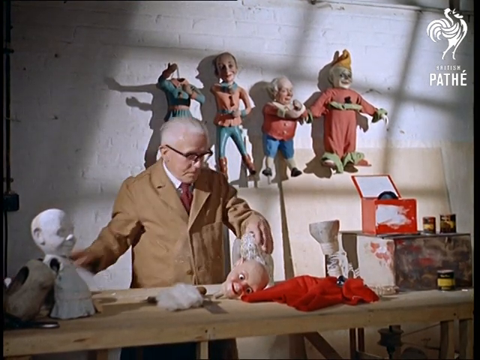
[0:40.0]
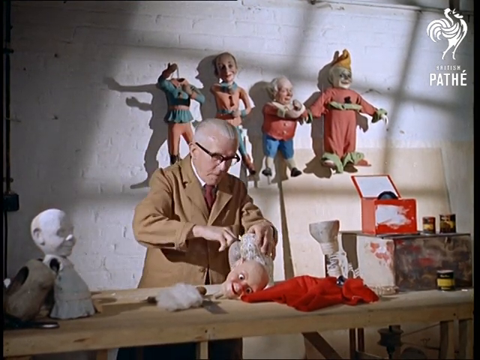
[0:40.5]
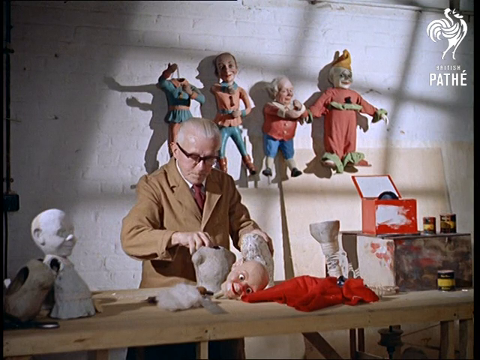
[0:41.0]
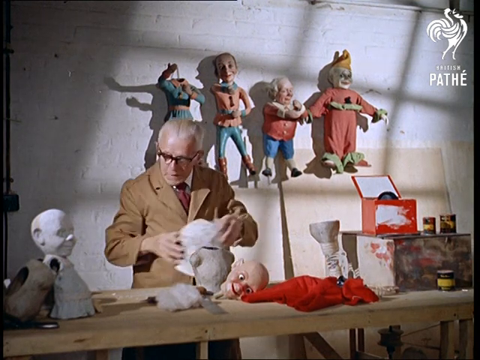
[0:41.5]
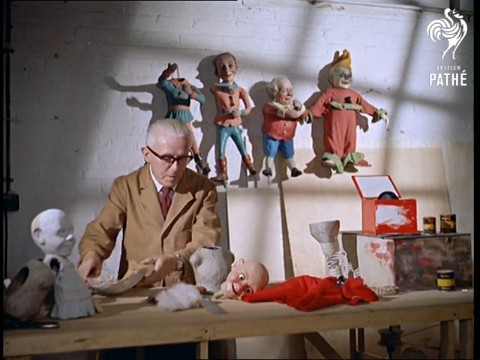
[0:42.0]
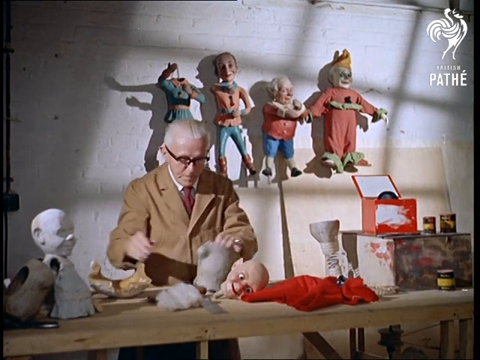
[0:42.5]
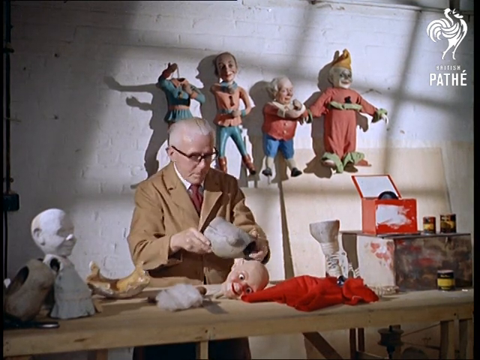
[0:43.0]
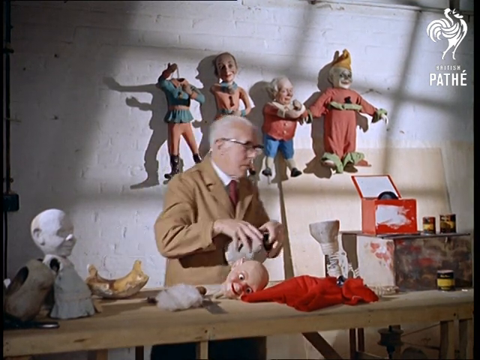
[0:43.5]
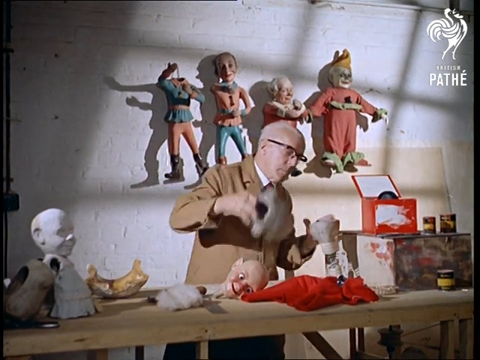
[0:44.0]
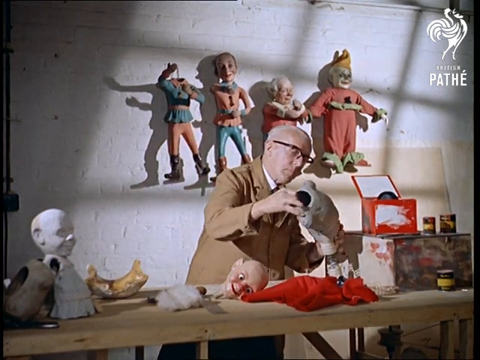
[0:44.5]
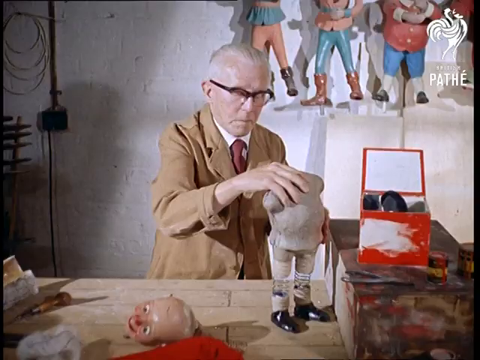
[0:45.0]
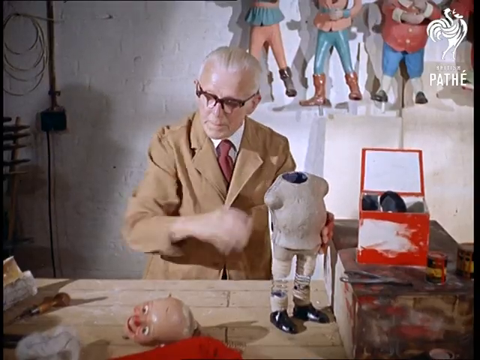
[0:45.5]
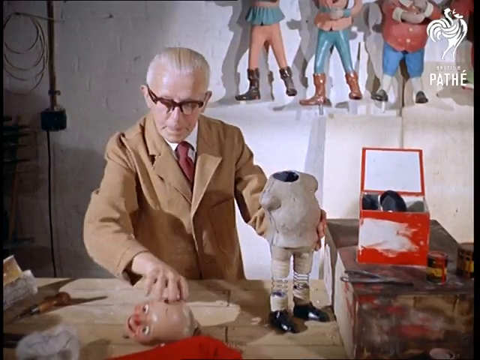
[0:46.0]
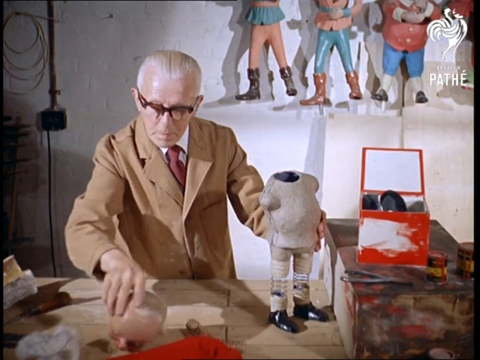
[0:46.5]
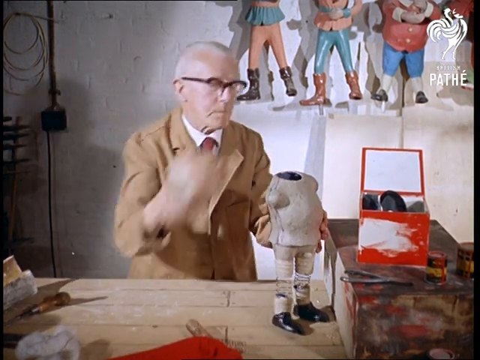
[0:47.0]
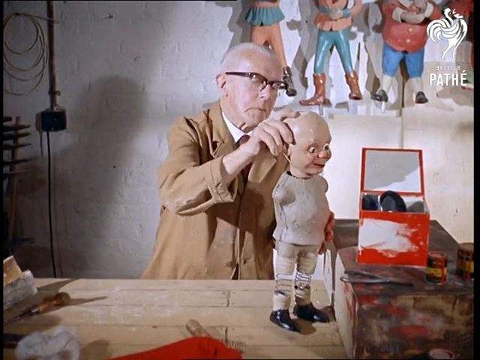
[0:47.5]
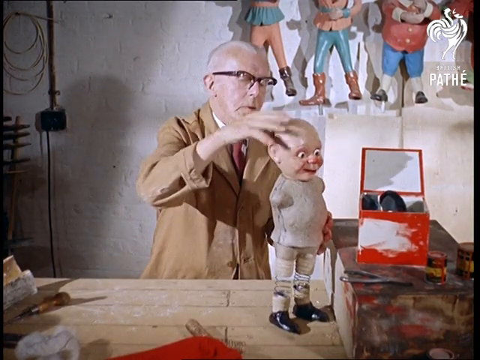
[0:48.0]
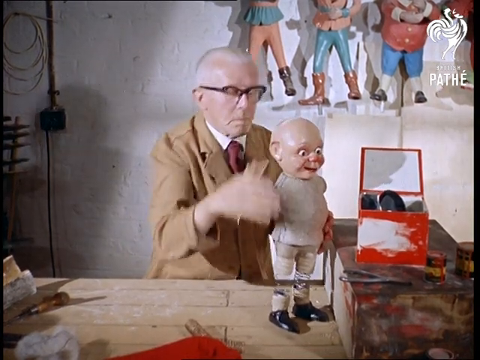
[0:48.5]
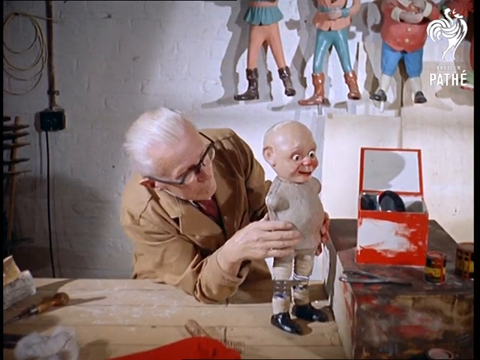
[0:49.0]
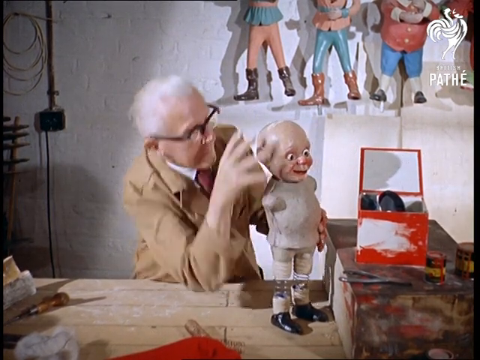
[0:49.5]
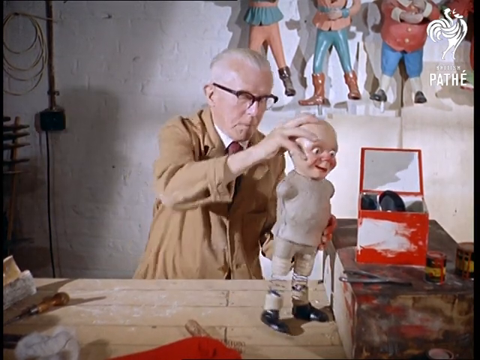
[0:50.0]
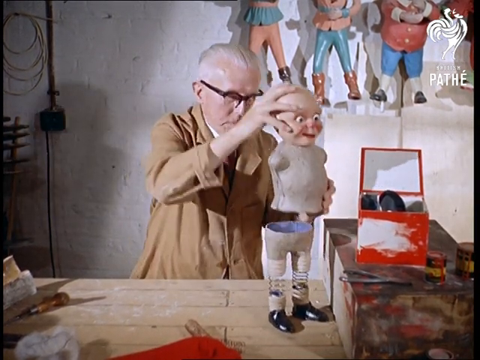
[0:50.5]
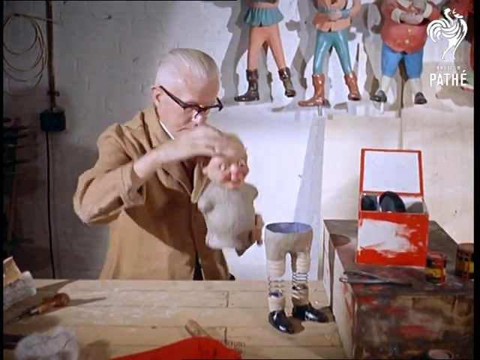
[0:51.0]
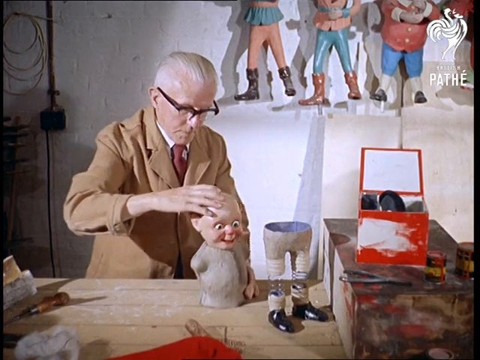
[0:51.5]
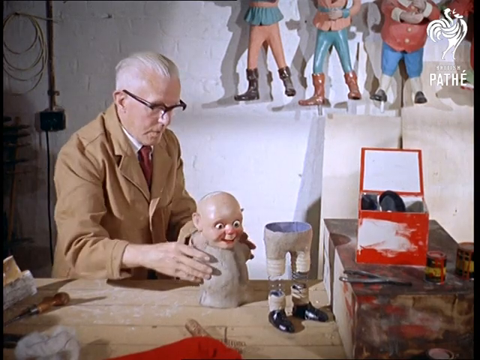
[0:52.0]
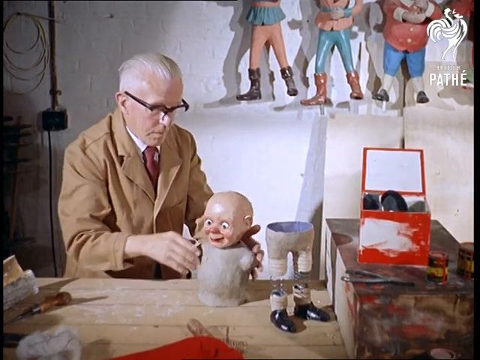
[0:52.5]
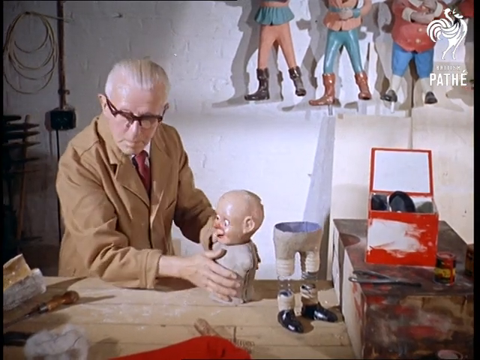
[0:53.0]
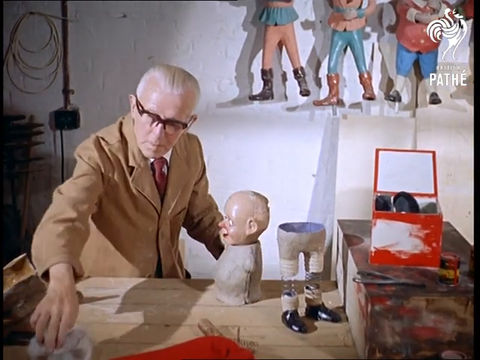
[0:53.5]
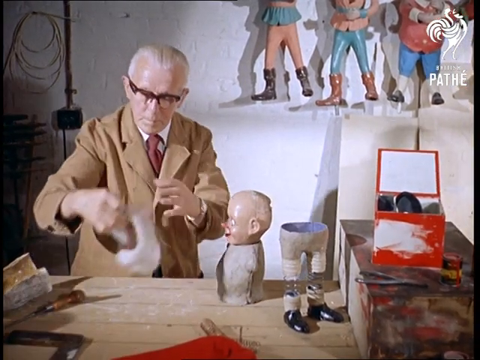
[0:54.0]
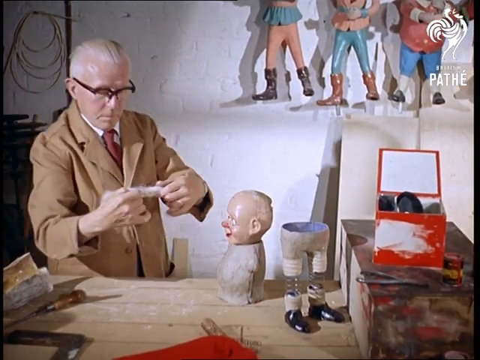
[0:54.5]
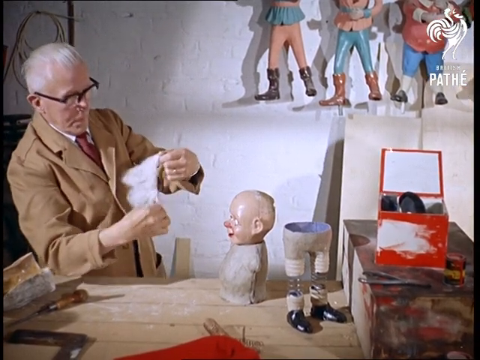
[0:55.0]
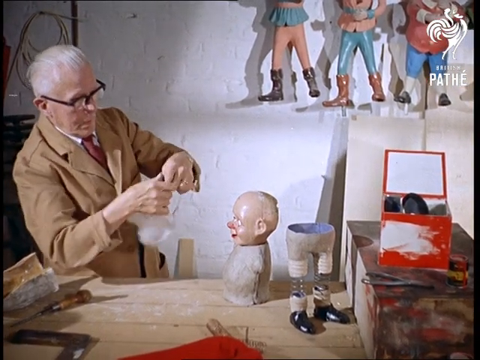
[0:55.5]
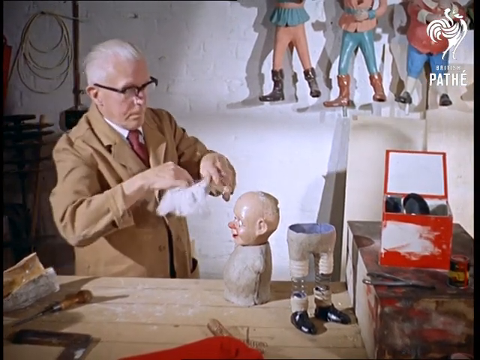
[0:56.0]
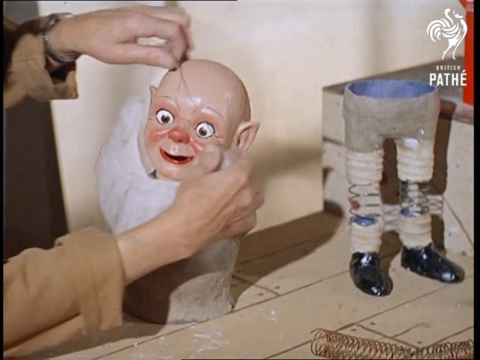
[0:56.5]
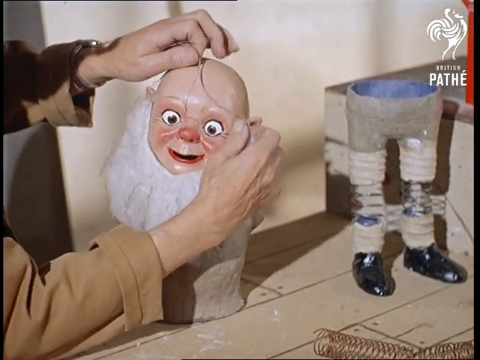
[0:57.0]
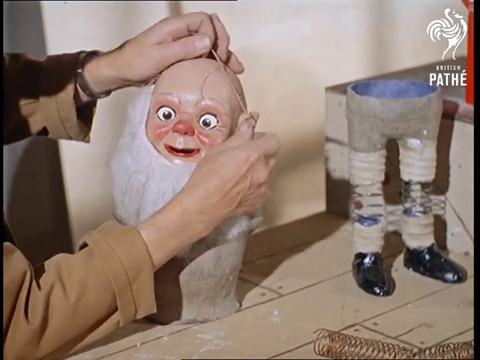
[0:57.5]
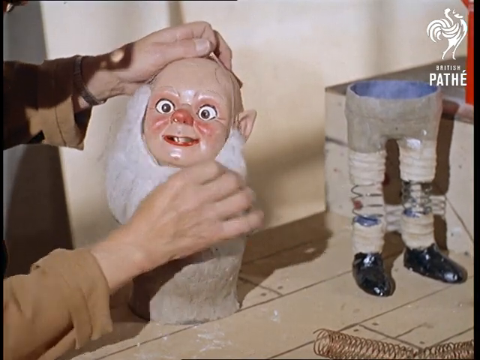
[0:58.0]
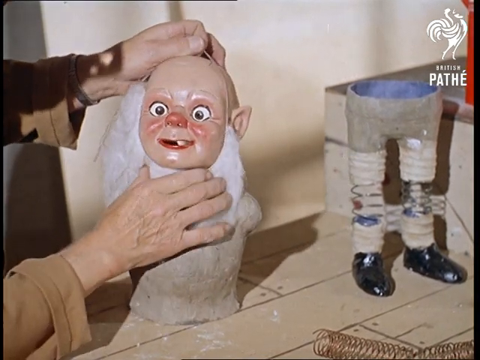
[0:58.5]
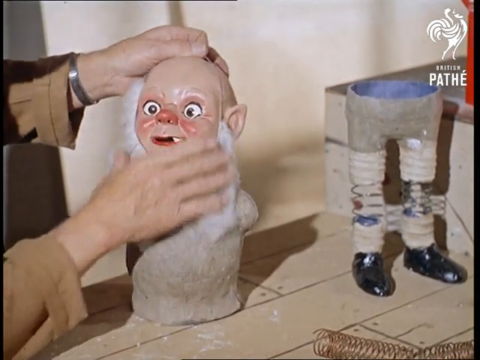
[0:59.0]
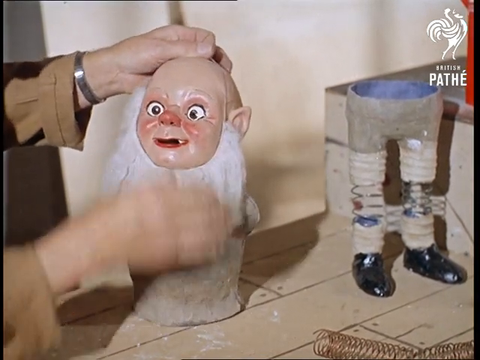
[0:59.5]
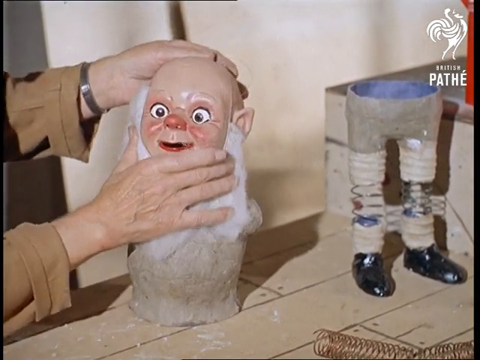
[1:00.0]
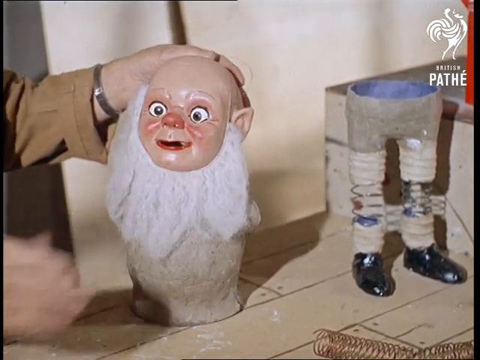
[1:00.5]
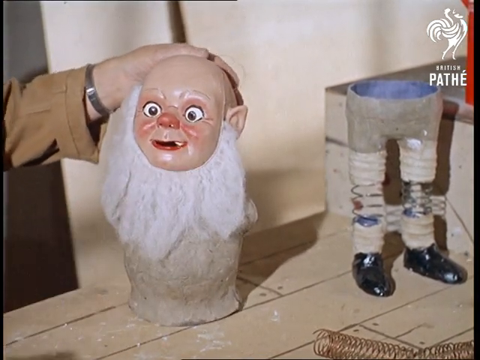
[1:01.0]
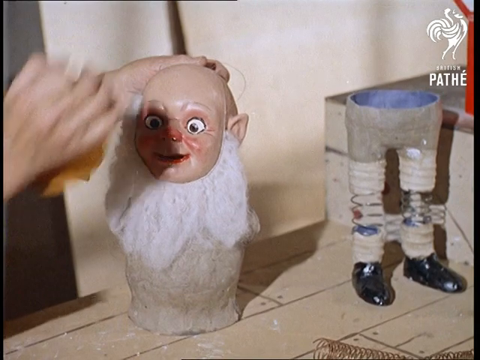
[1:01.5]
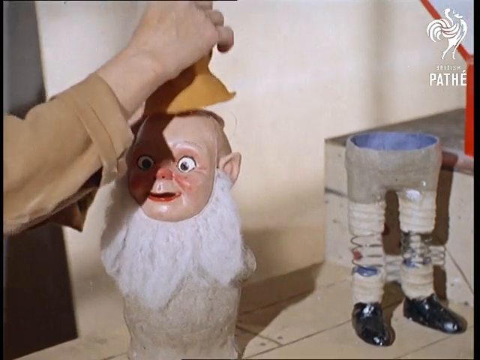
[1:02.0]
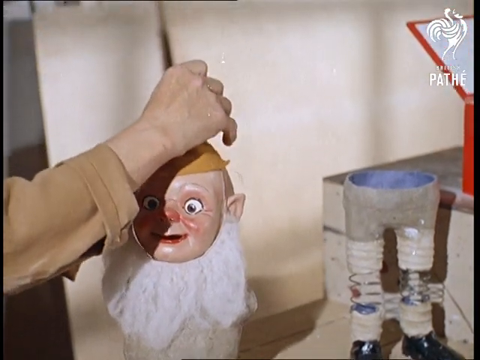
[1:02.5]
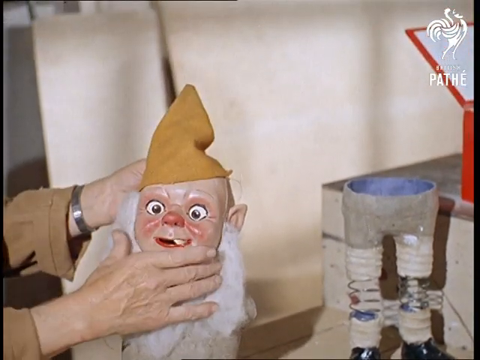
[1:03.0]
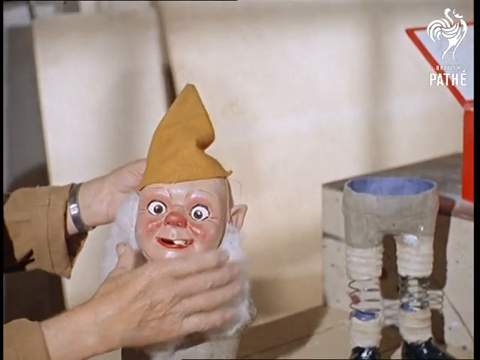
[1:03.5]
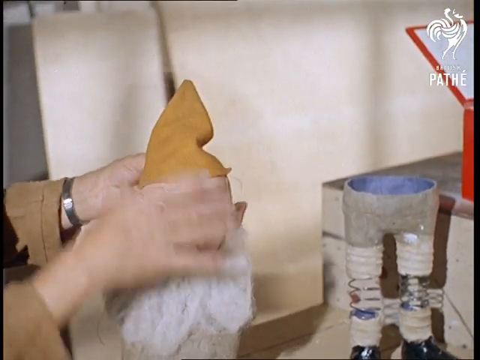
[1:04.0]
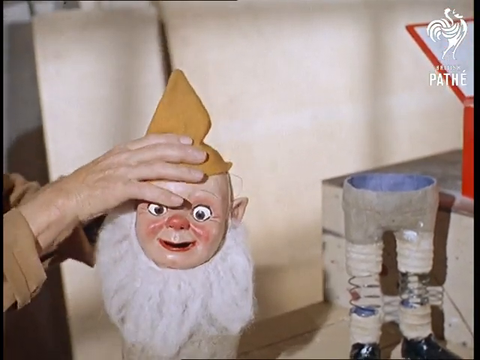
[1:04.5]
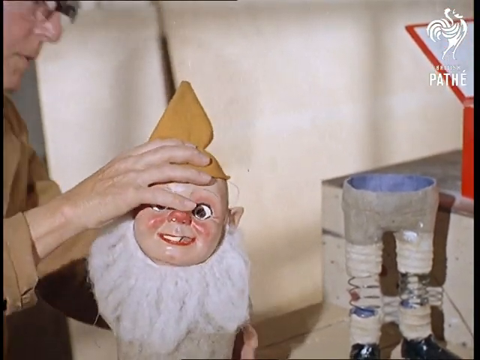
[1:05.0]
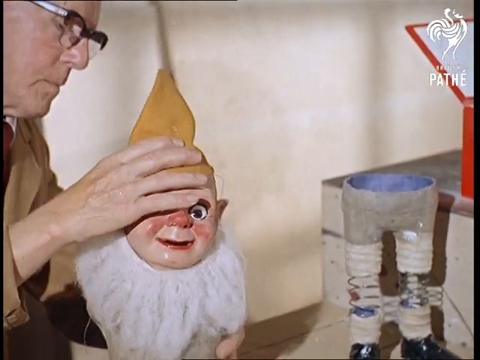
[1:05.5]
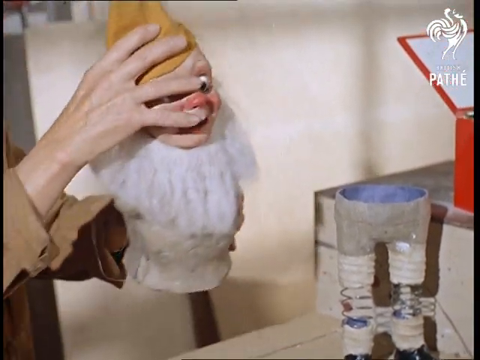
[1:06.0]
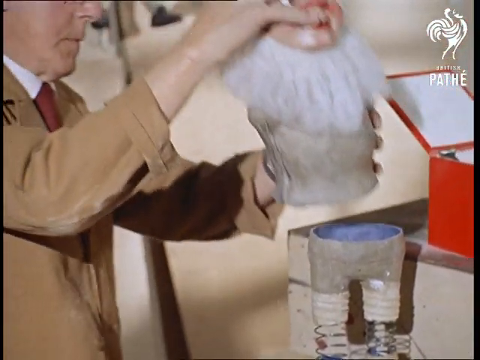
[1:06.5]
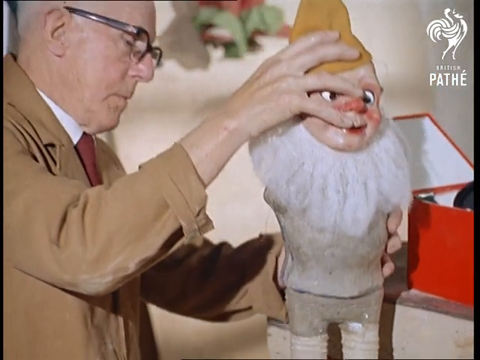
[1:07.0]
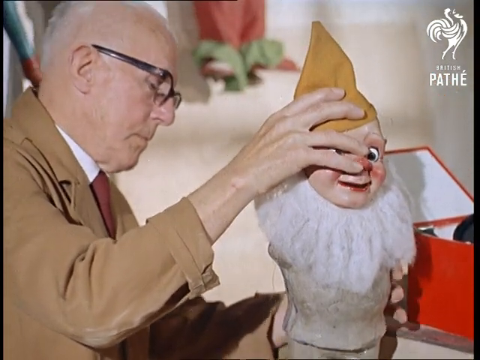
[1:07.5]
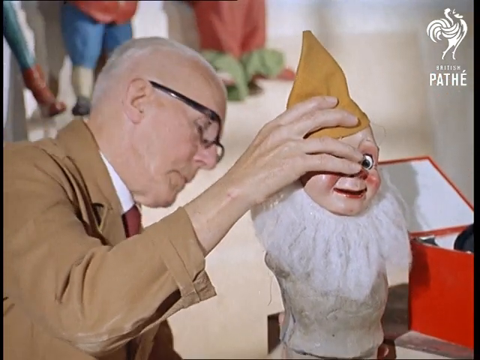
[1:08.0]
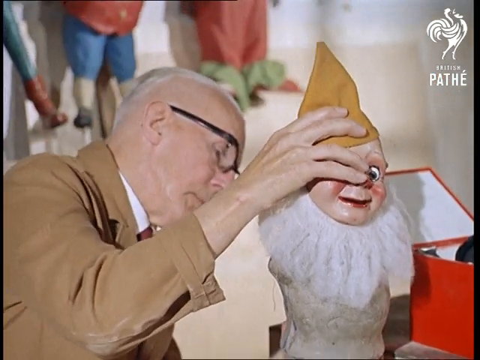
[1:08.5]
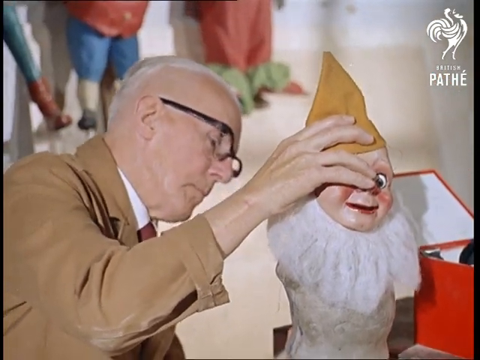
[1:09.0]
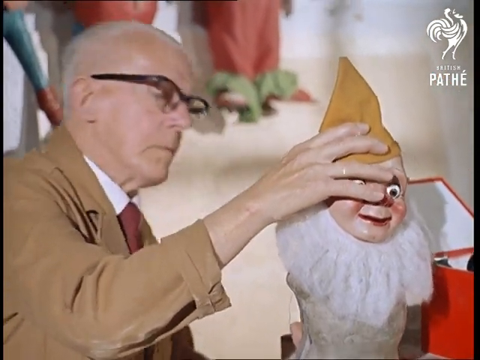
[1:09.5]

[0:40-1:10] The man seems to be some sort of puppet maker. Several puppets are in the background, and one of them is headless, hanging on the wall. One looks a little like an older gentleman, one like a younger boy, and one is without a hat. The puppet master works on a puppet, sort of opening a mechanism, and seems to be building a new puppet's body and head. He carefully adjusts the head and takes it out again, making sure it aligns perfectly. He puts on the puppet's white beard, places a yellow hat on it, and then places the torso back on the legs so the puppet becomes whole again.